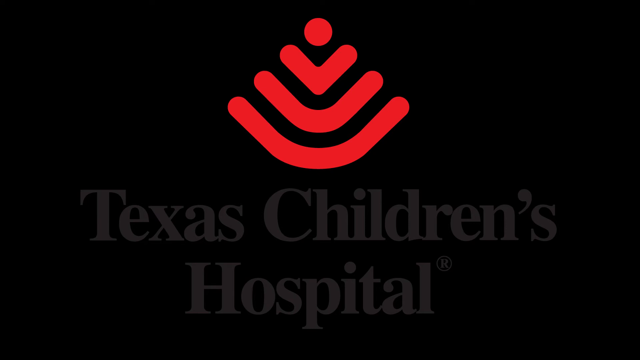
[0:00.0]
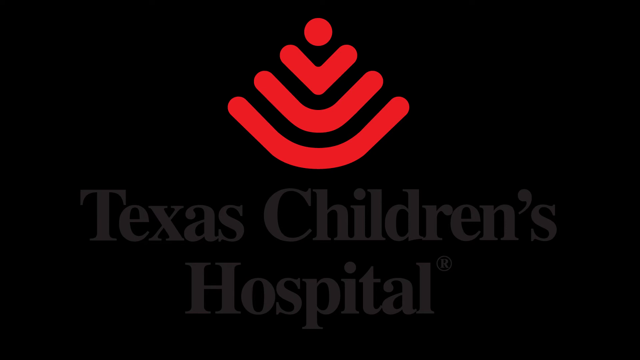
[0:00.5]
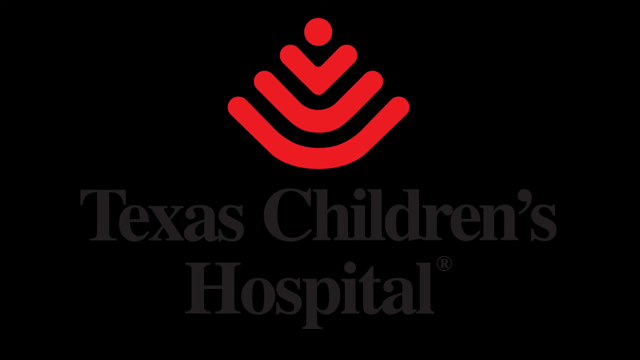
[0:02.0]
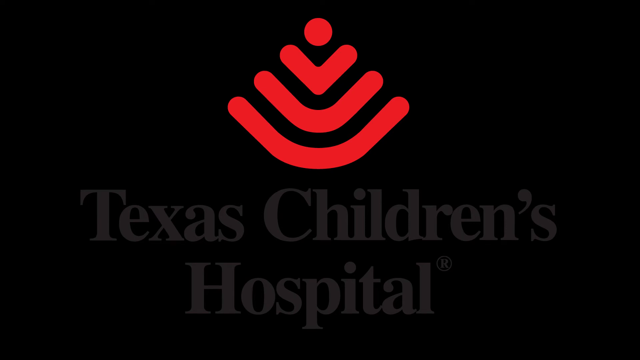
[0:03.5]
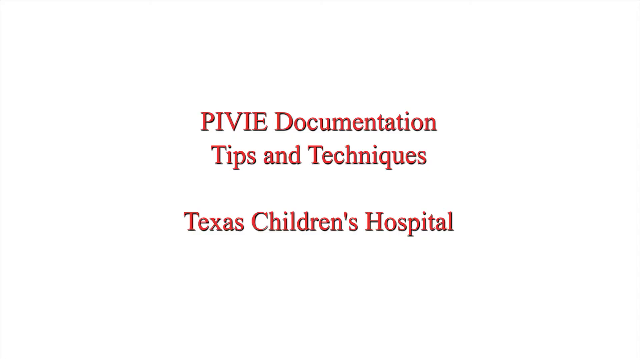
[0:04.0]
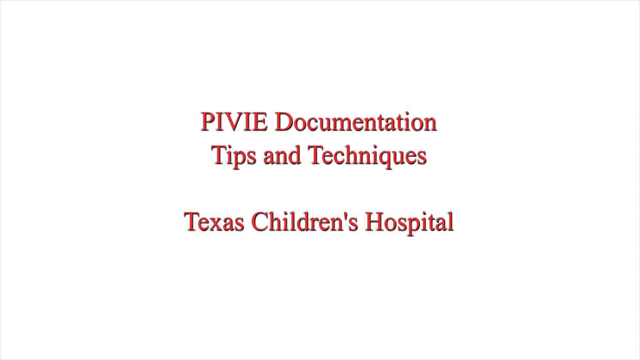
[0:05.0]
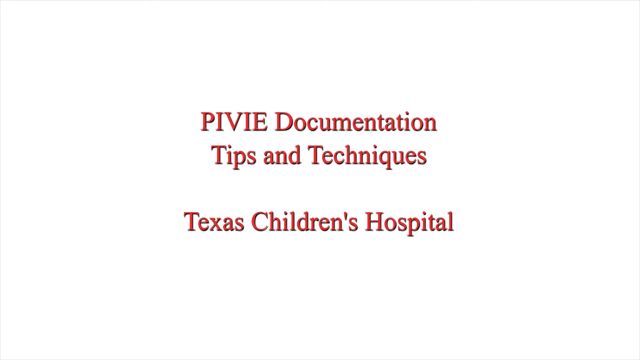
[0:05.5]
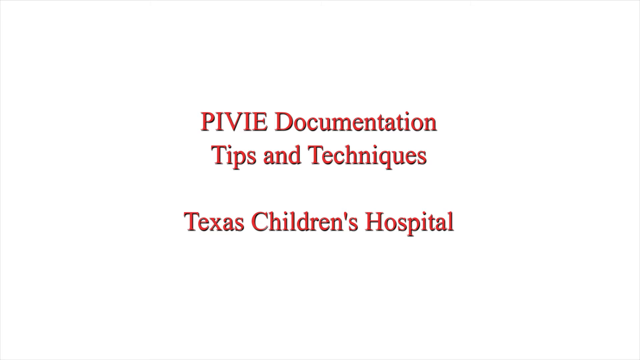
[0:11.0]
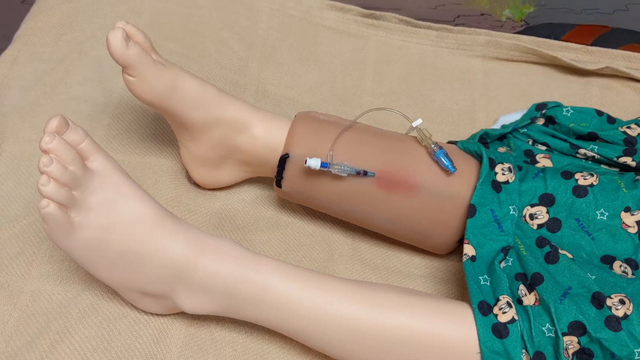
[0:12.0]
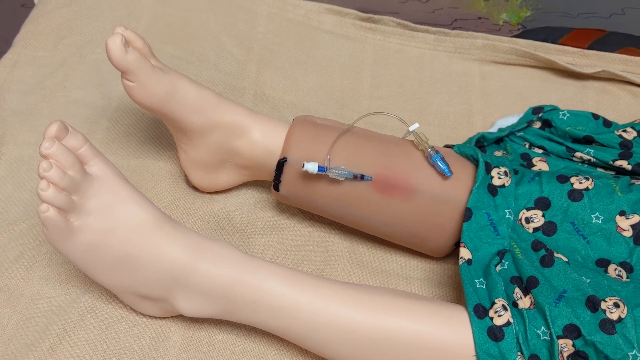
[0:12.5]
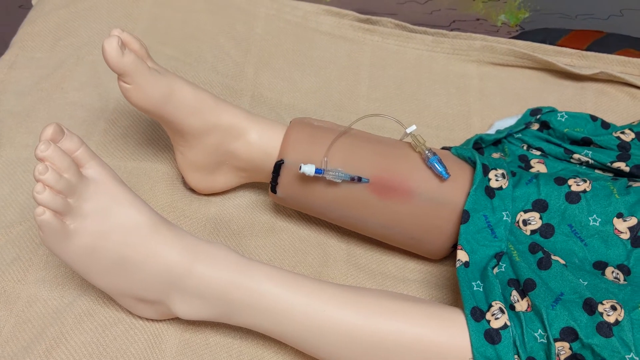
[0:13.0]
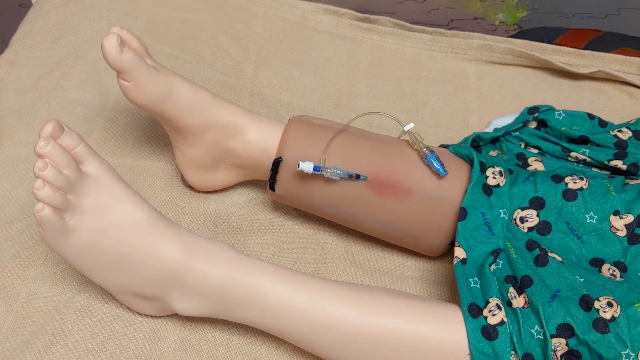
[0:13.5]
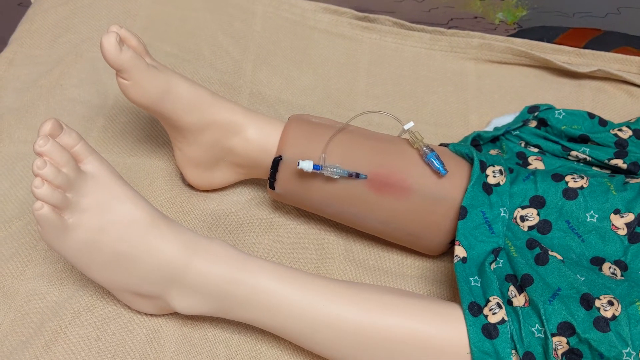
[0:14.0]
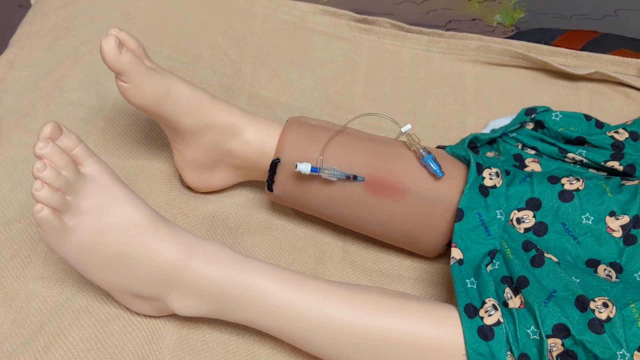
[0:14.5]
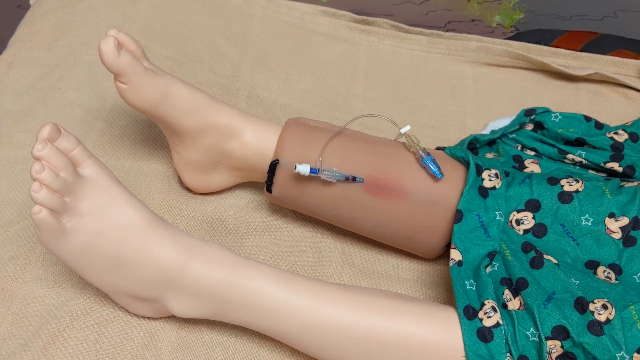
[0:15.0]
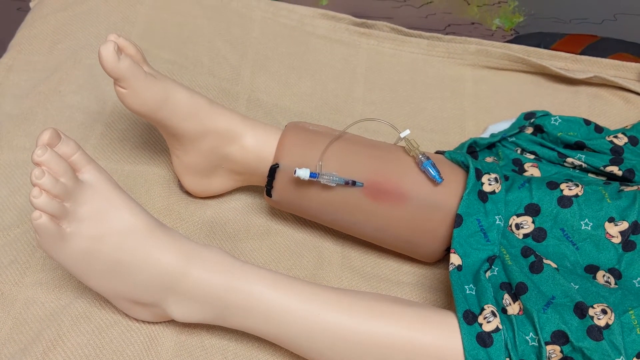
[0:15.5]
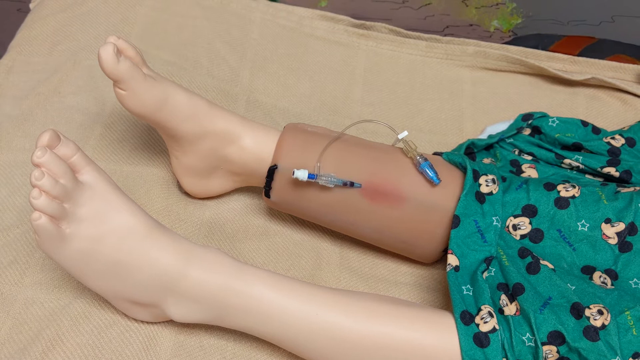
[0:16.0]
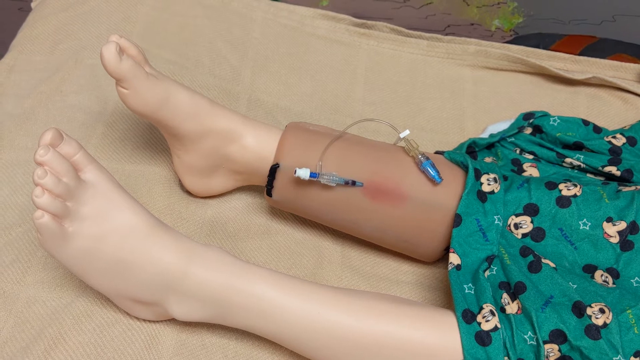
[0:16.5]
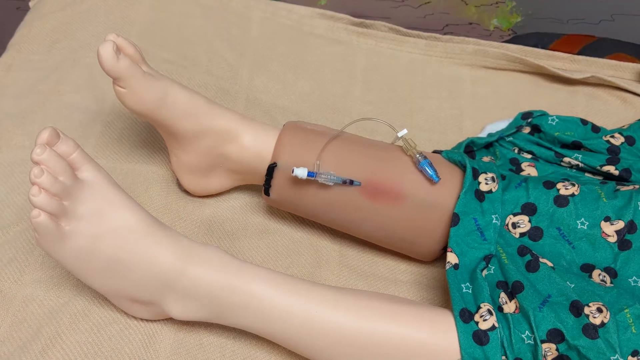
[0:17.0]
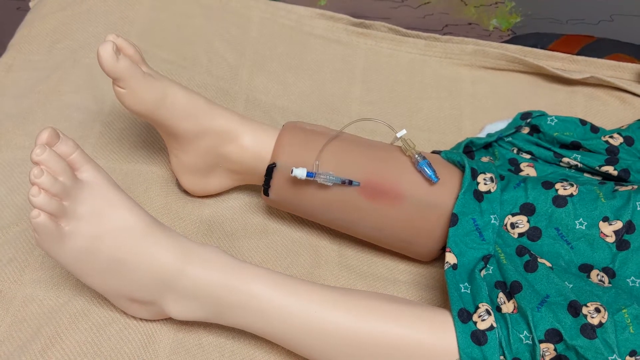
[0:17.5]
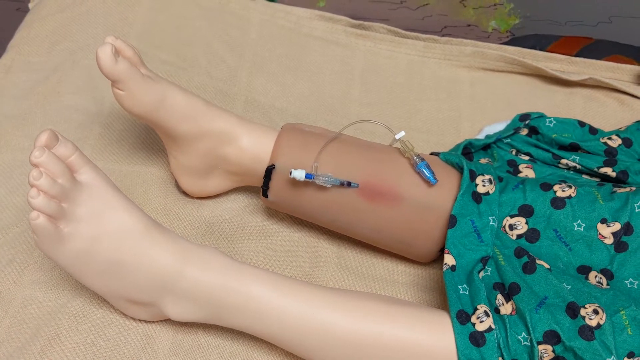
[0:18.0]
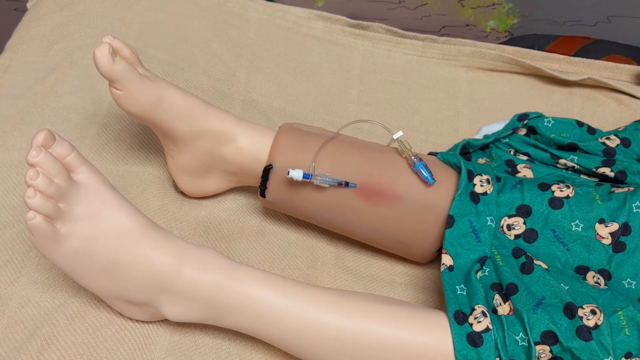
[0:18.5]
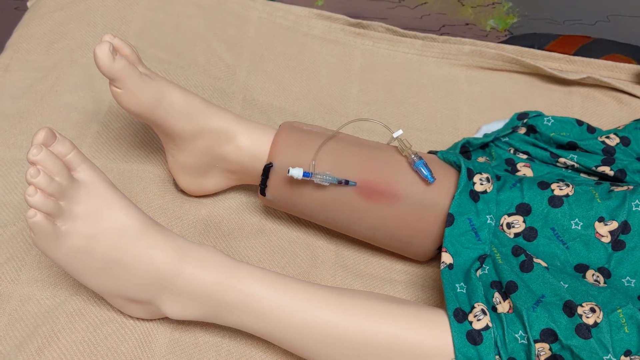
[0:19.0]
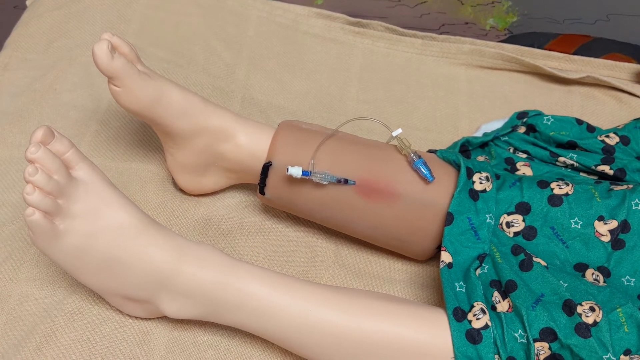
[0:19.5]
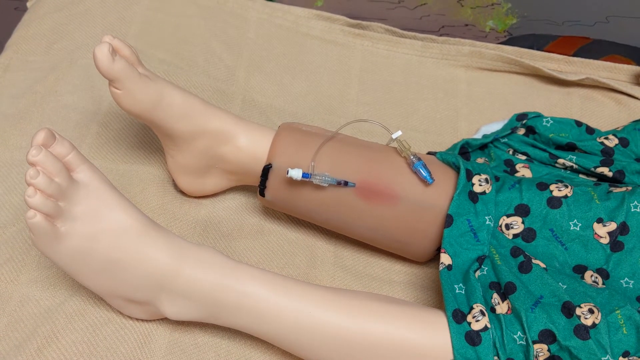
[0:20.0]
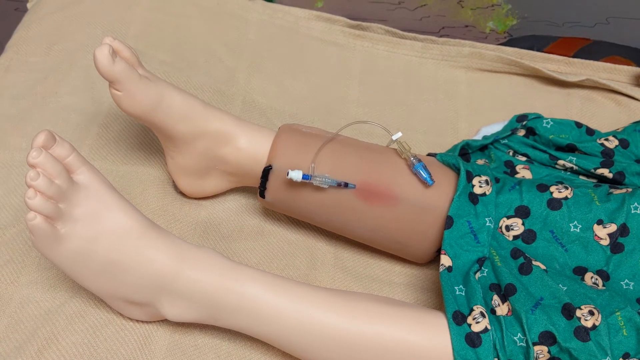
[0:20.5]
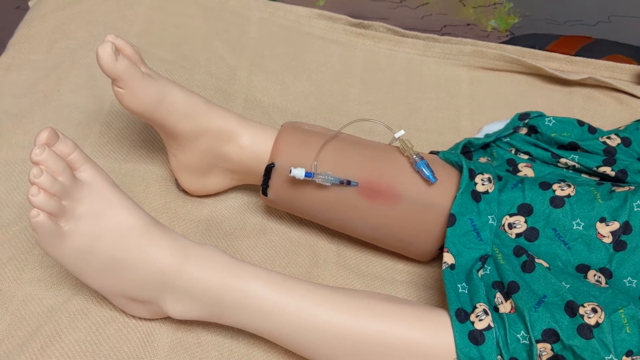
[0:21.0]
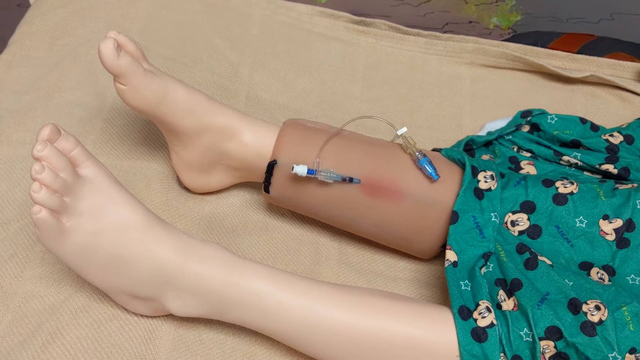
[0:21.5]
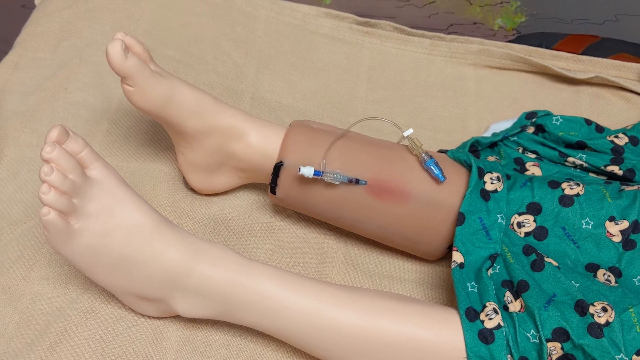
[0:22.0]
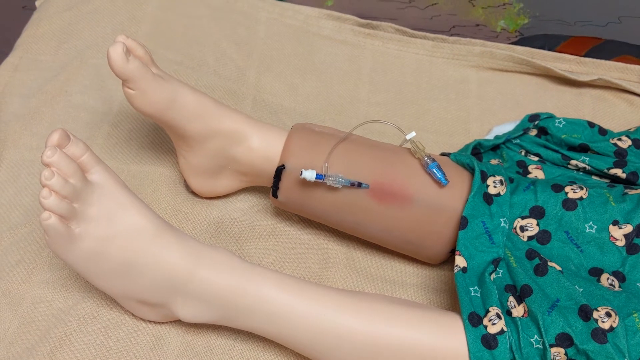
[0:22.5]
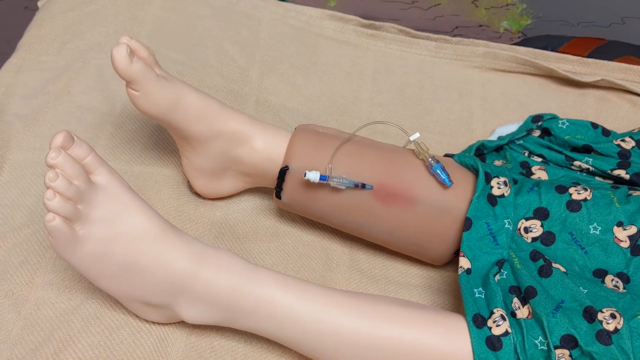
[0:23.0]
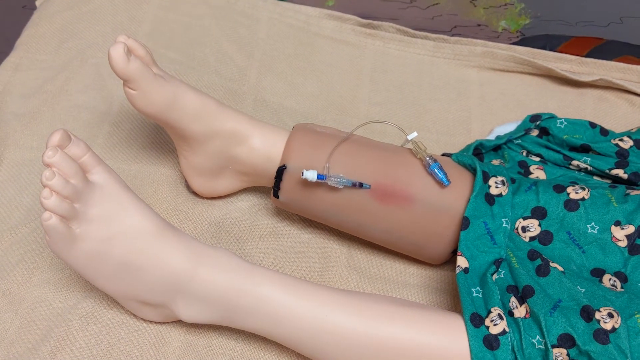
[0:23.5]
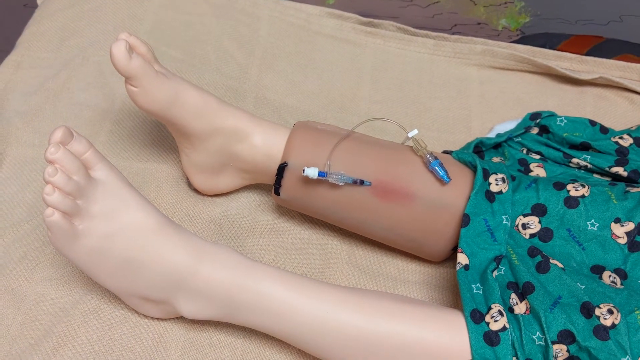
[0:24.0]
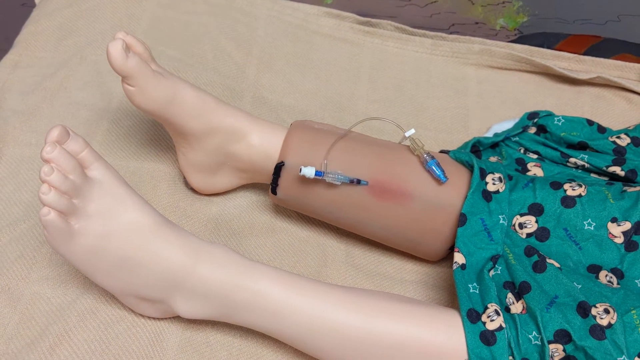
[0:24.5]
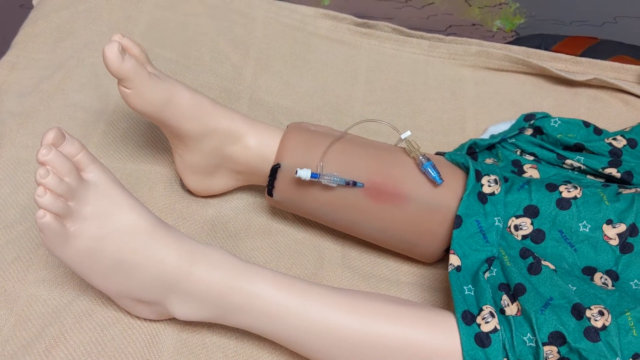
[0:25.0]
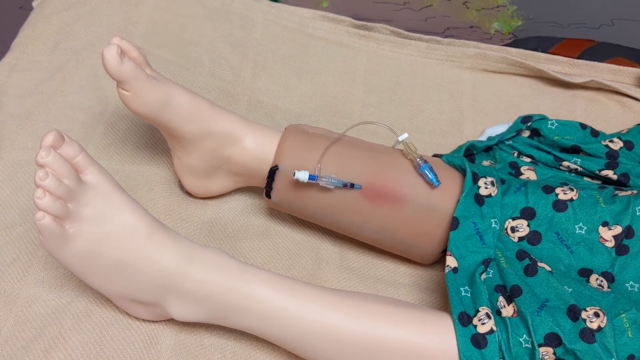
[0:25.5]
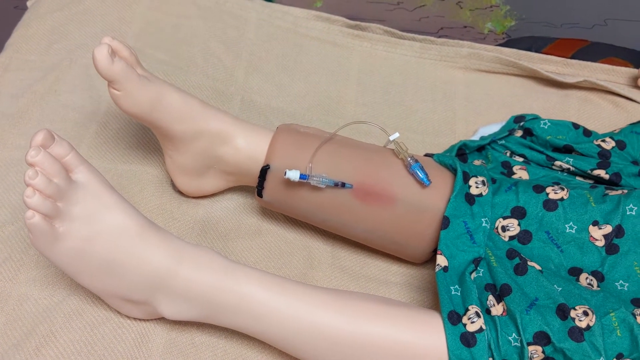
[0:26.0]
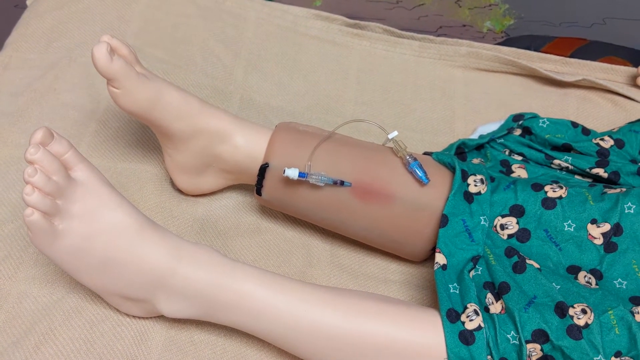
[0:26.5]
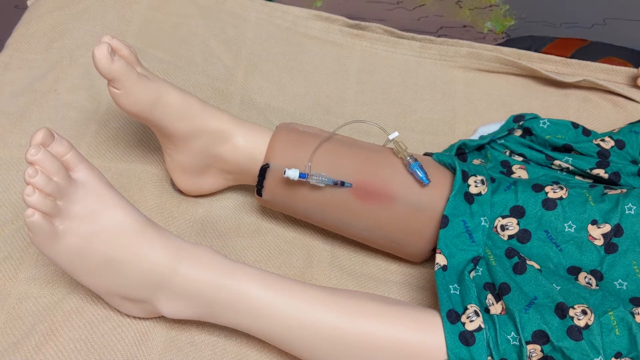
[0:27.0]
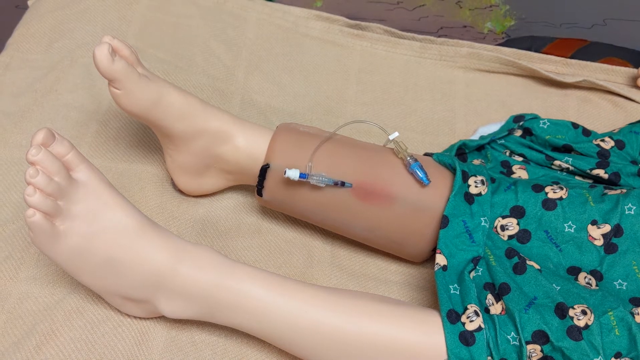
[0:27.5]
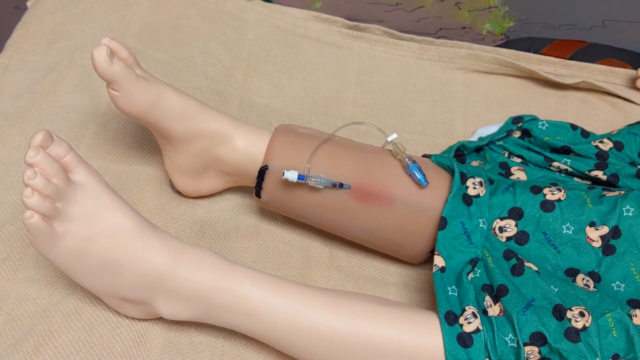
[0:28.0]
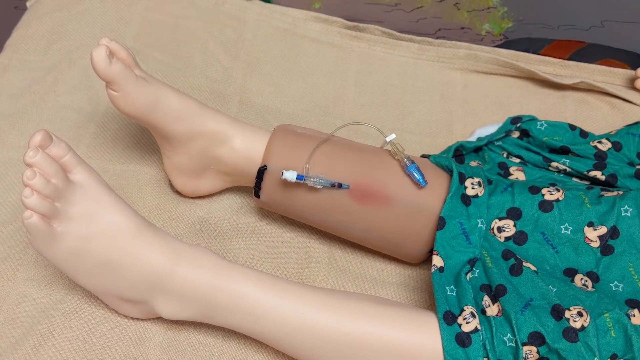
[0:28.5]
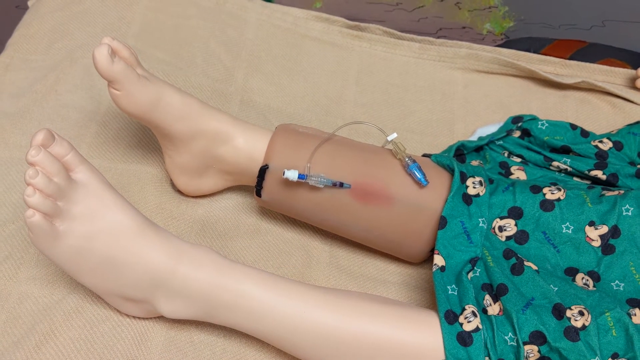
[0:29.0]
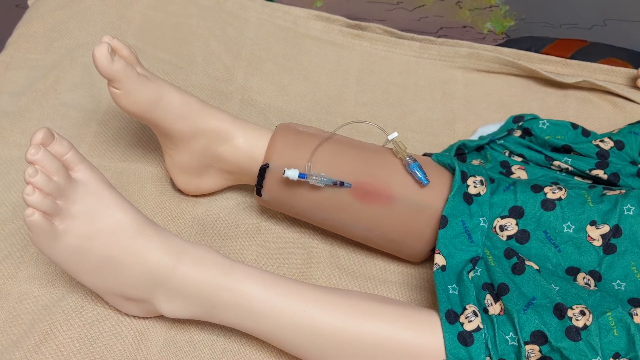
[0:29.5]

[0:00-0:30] The video opens on a black screen with large dark gray text at the bottom that reads "Texas Children's Hospital." Above the gray text is a red logo made of two rounded, banded lines at the bottom, a triangular shape at the top, and a circle above that. A white screen then appears with brief text at the top that reads "PIVIE documentation tips and techniques, Texas Children's Hospital." Next, footage shows a mannequin wearing a Mickey Mouse gown. On the mannequin's right foot is a flesh-colored device with an IV inserted into it. The mannequin is held in place by a pair of scissors, and the doll is on top of a tan sheet. The Mickey Mouse hospital gown is green and has stars as well as Mickey in different facial expressions.